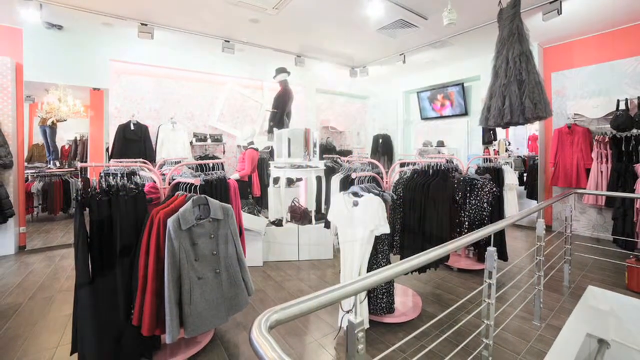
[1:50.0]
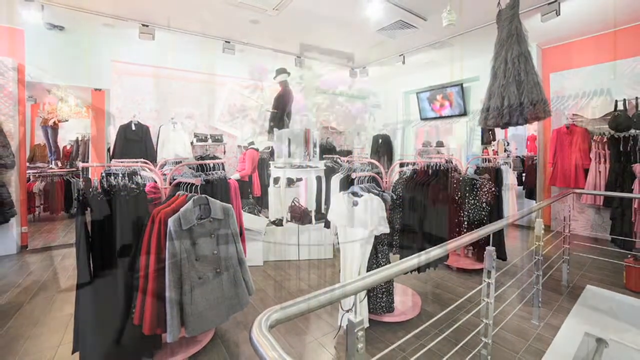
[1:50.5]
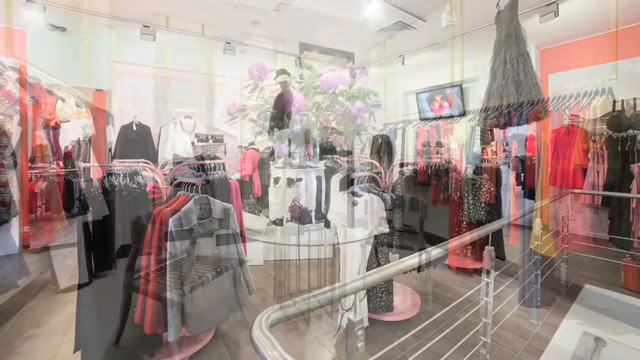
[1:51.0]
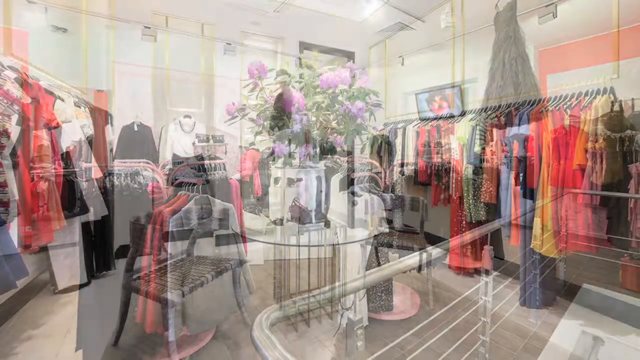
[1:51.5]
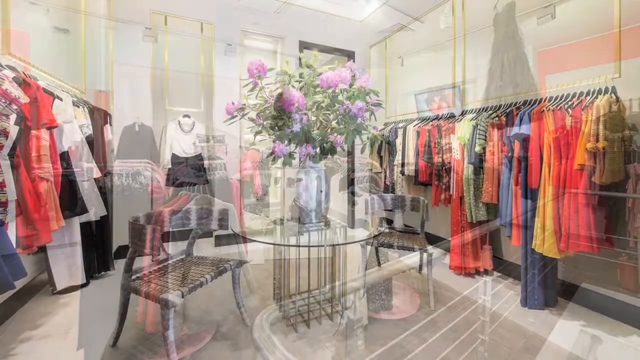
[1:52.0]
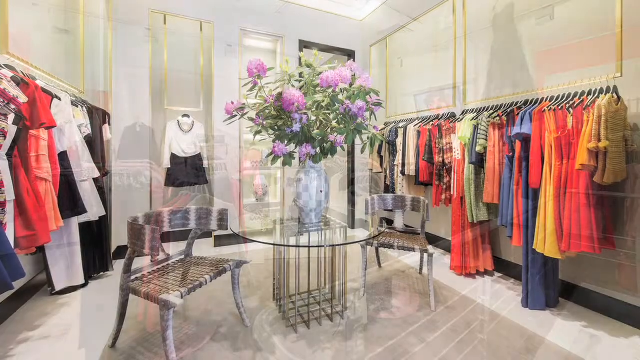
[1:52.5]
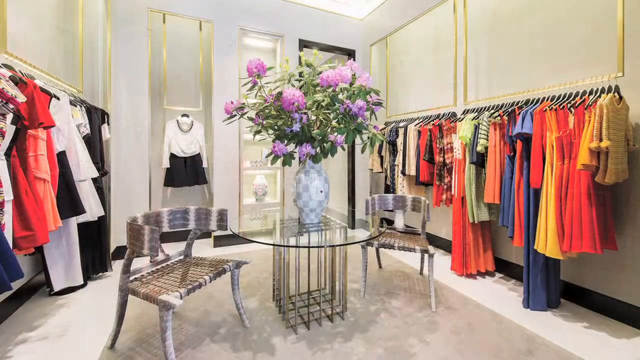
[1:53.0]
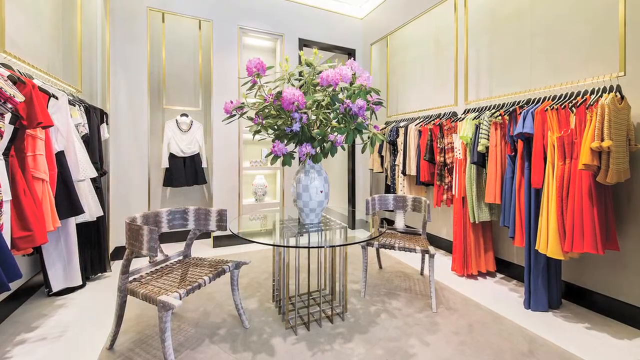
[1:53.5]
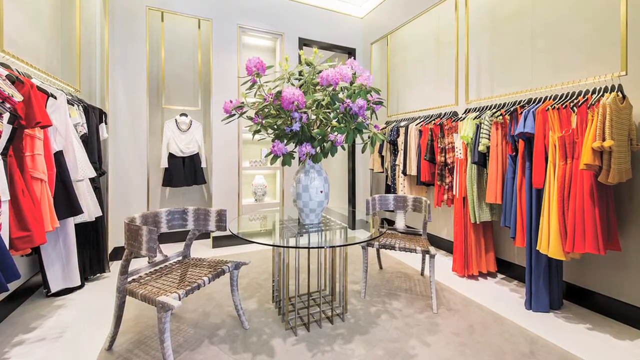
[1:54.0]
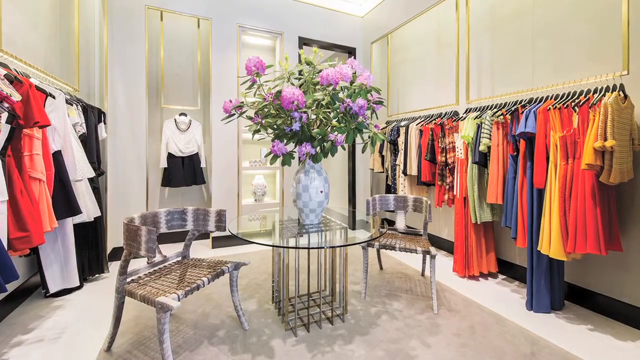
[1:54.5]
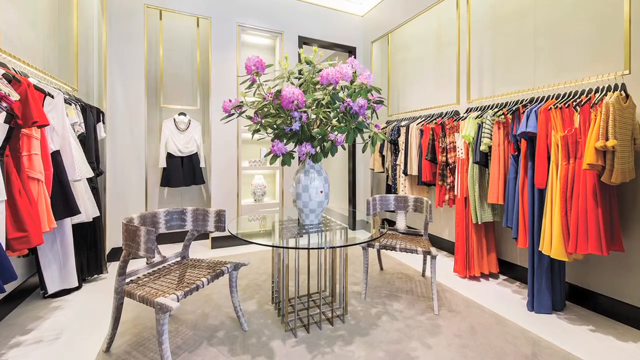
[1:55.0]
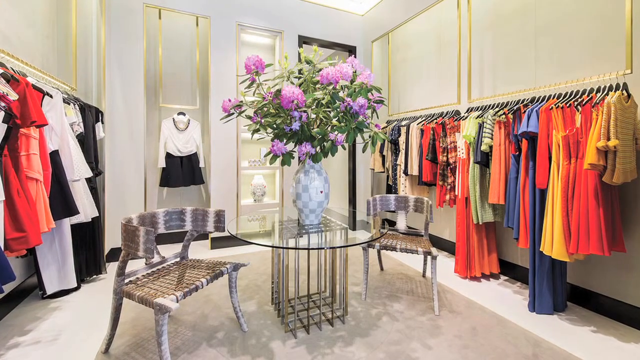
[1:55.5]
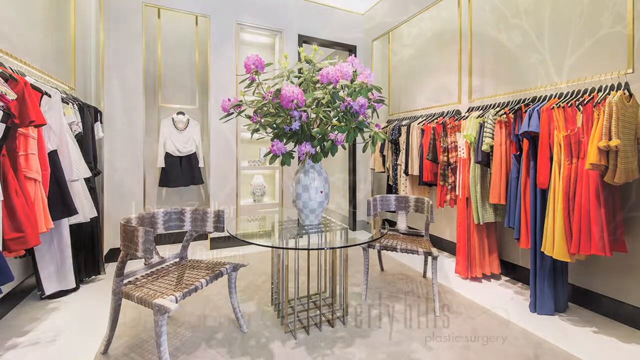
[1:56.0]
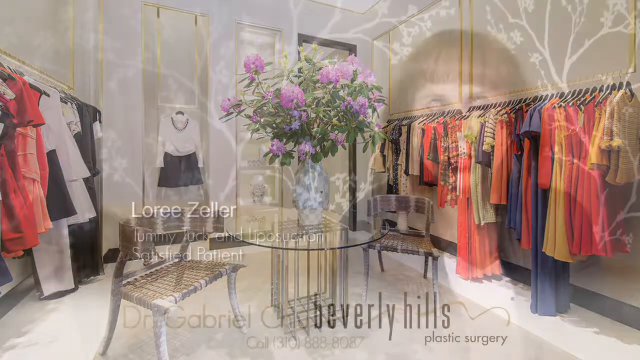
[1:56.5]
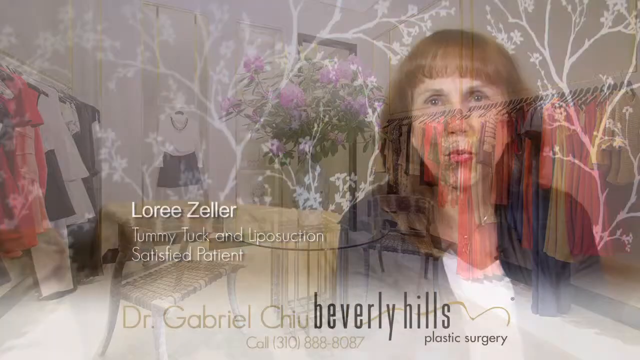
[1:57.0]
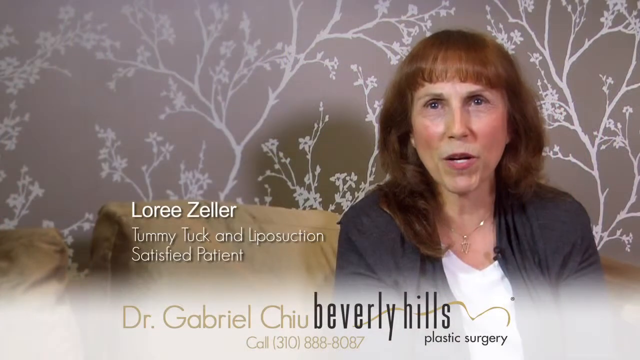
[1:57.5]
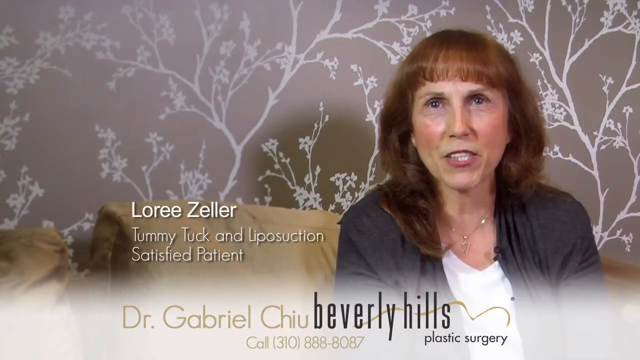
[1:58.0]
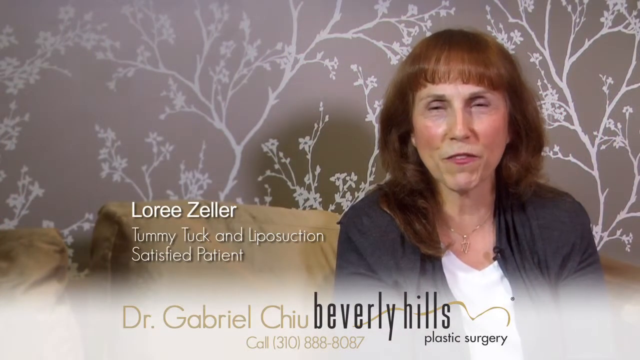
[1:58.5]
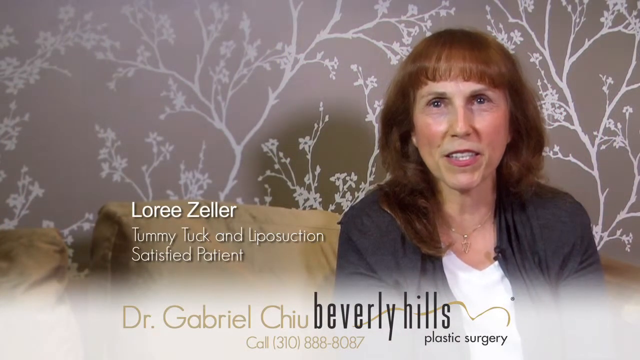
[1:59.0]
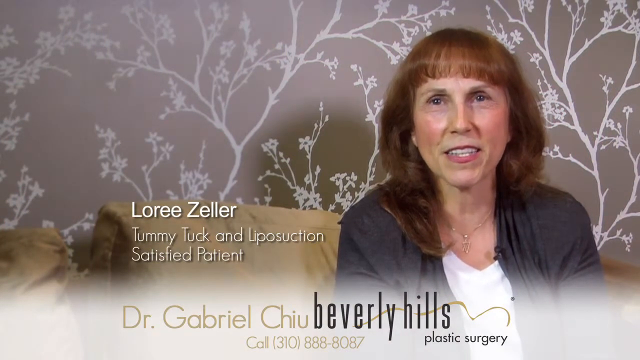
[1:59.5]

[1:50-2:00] A gradient transition leads to another area of what appears to be the same shop. A glass table with some flowers is in the middle of the room, with clothes rails on either side of it and two chairs on either side of the table. This area looks very upmarket, with clean white walls with gold trim, gold coat hangers and a soft-looking carpet. The video then cuts to Lori Zeller talking to the camera with a smile on her face.